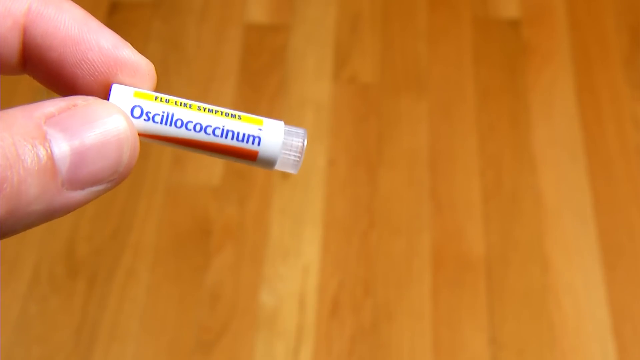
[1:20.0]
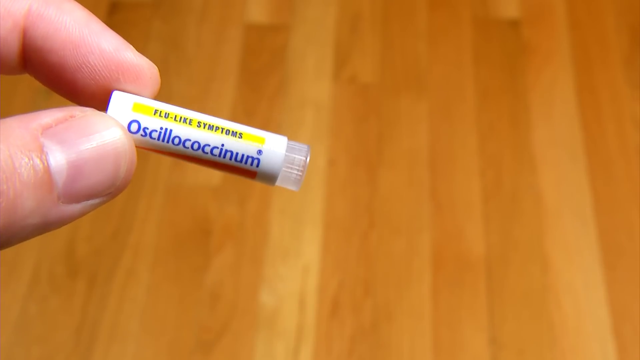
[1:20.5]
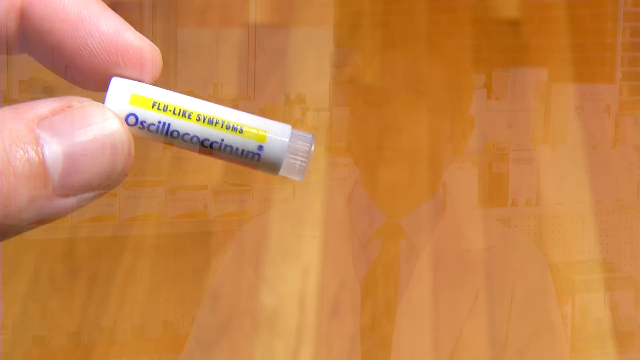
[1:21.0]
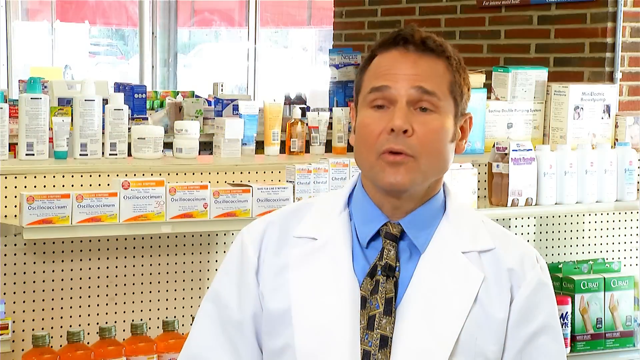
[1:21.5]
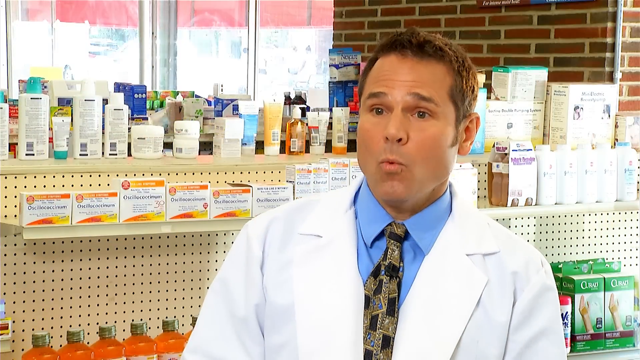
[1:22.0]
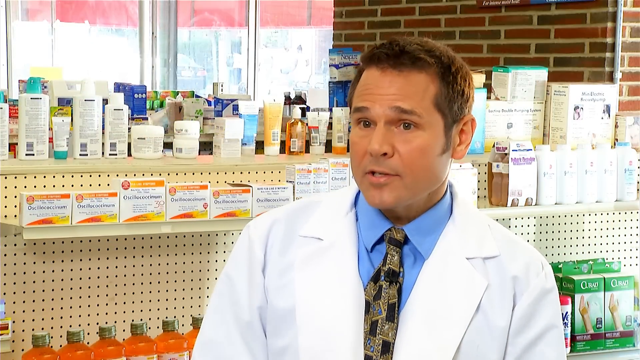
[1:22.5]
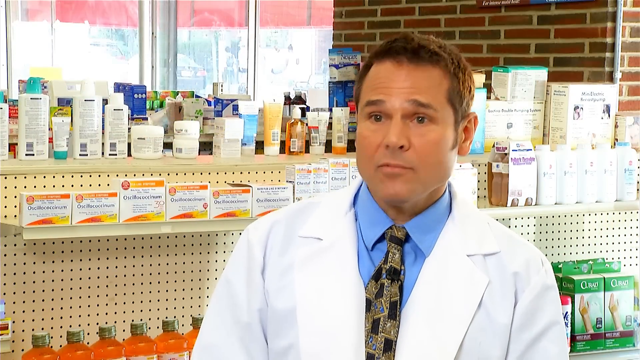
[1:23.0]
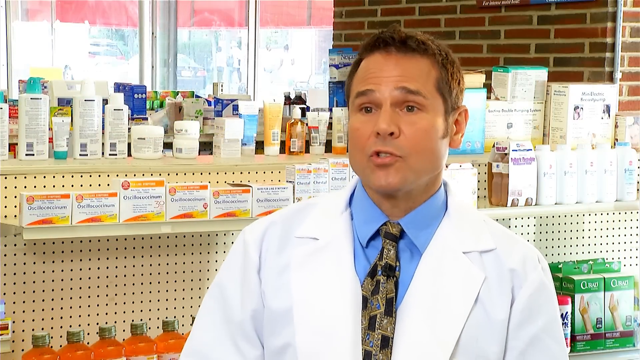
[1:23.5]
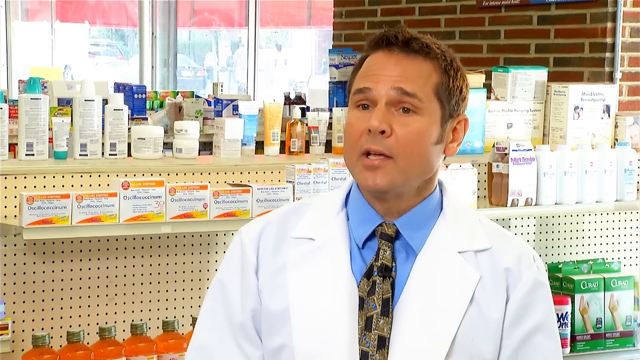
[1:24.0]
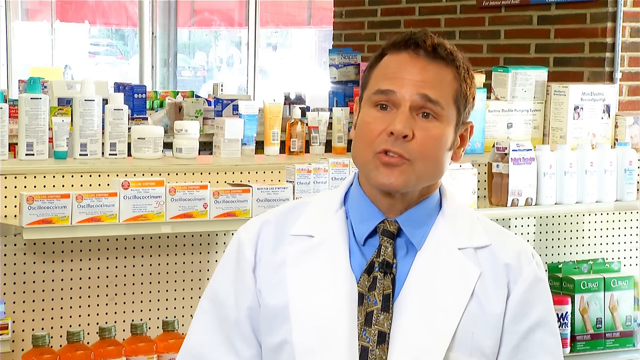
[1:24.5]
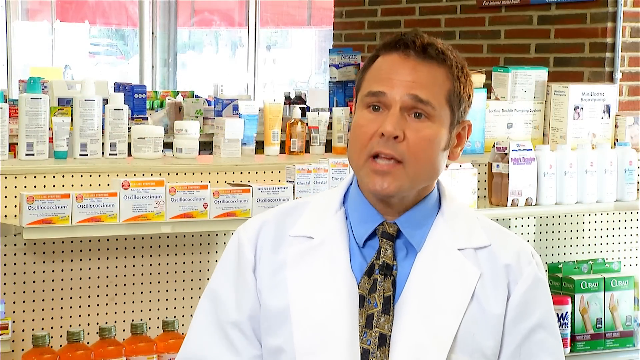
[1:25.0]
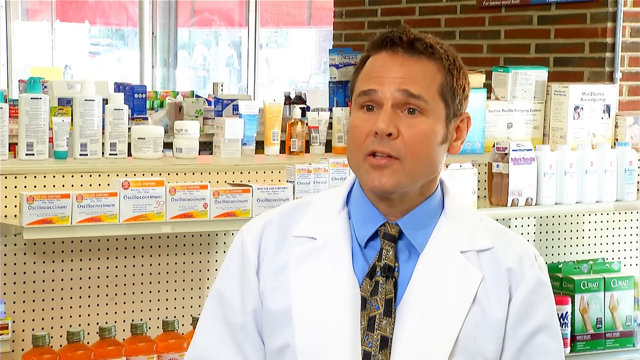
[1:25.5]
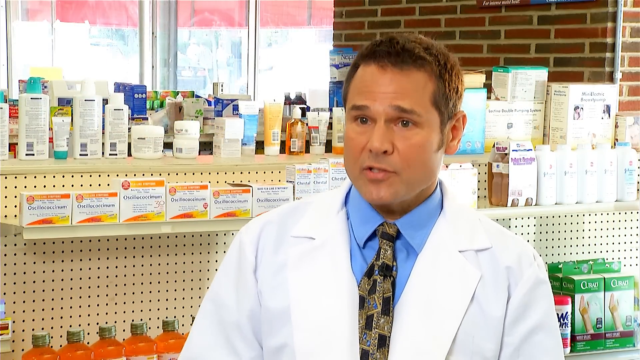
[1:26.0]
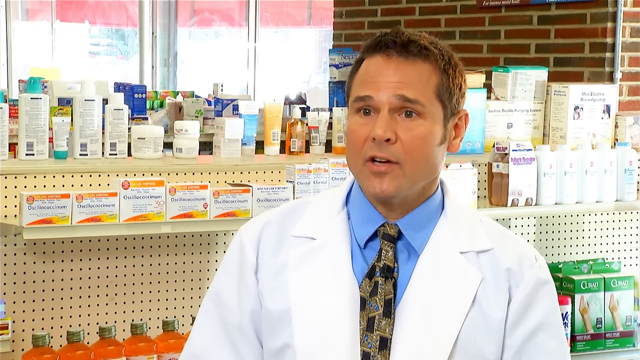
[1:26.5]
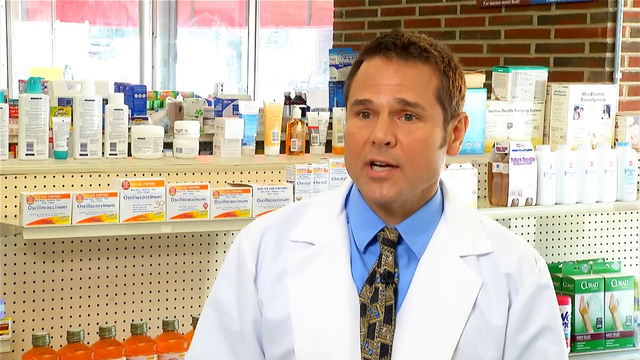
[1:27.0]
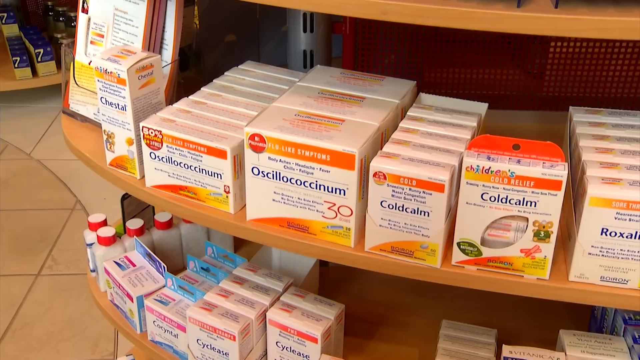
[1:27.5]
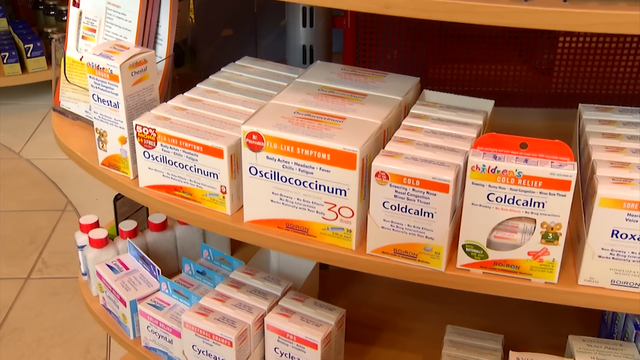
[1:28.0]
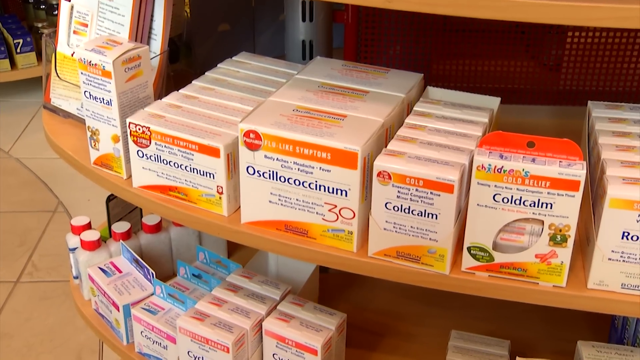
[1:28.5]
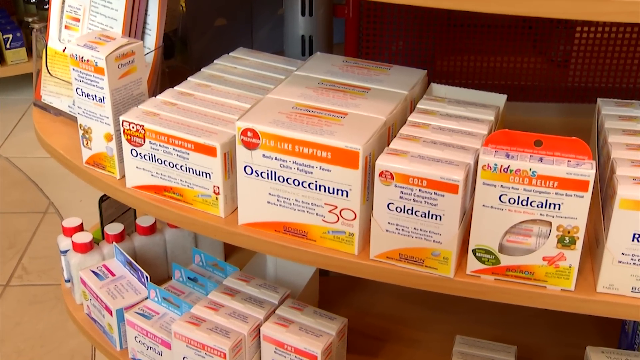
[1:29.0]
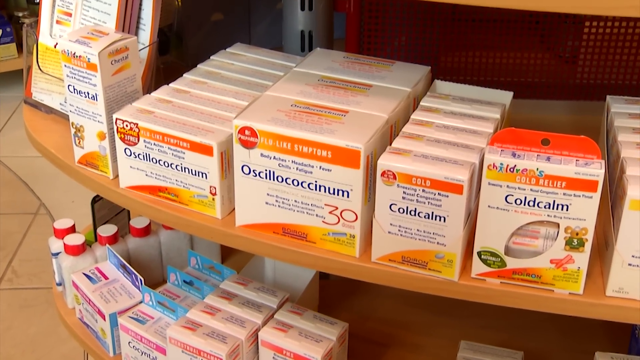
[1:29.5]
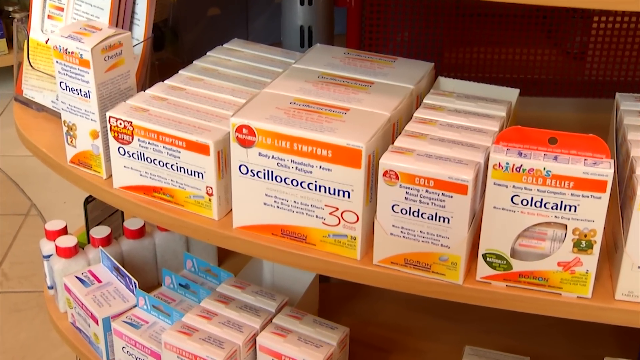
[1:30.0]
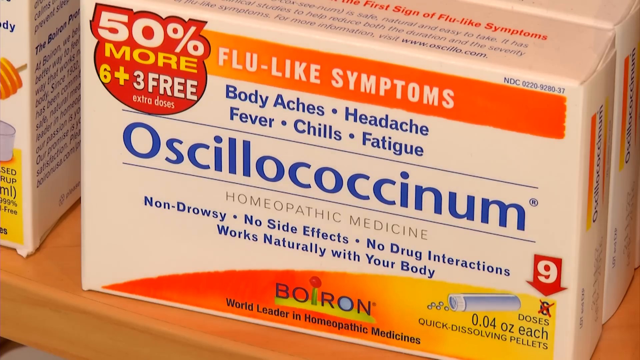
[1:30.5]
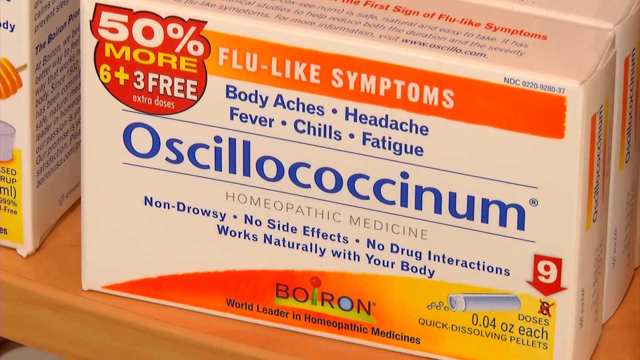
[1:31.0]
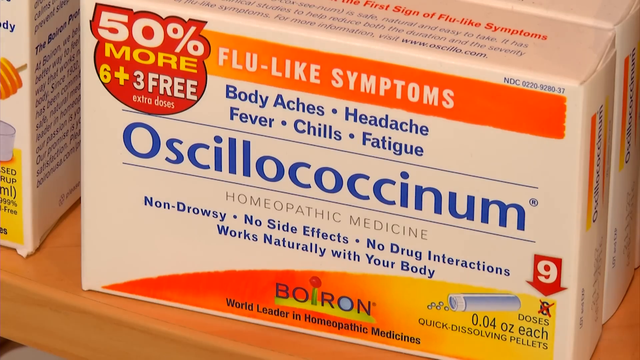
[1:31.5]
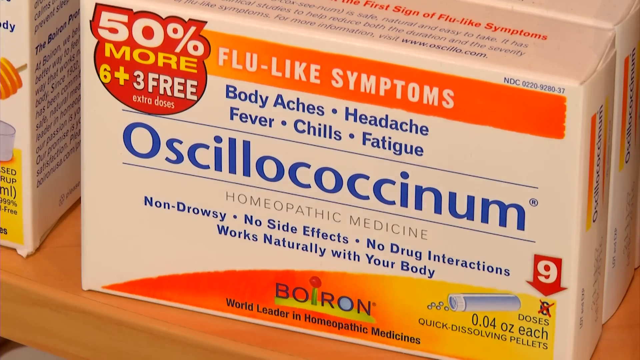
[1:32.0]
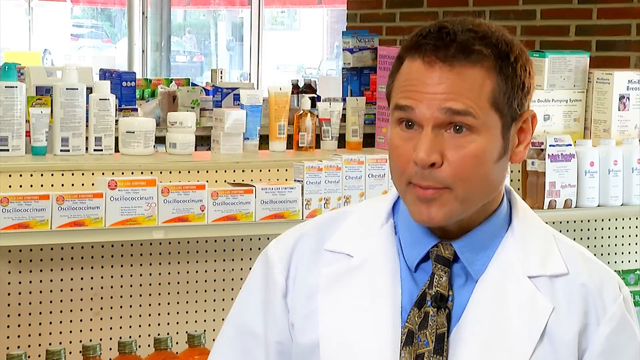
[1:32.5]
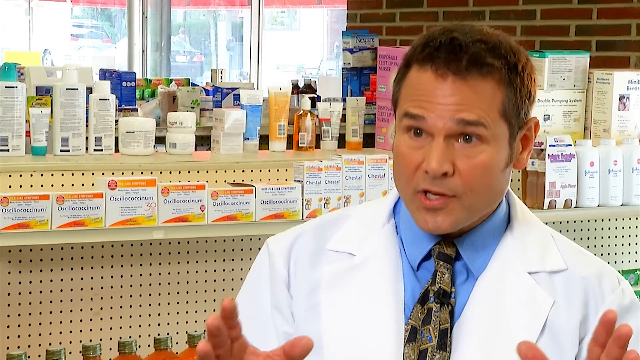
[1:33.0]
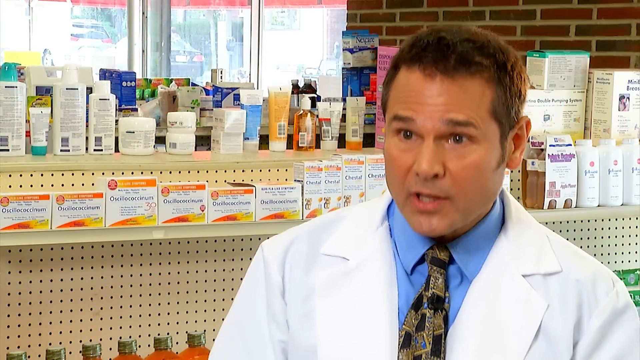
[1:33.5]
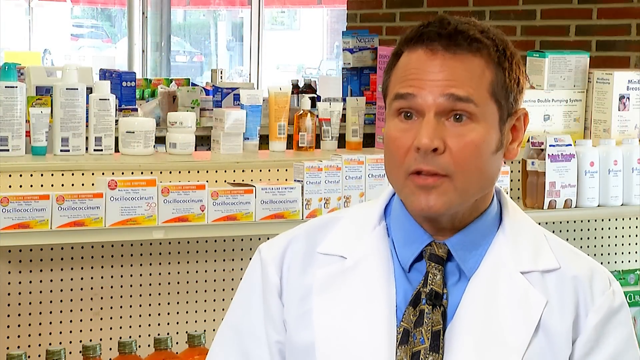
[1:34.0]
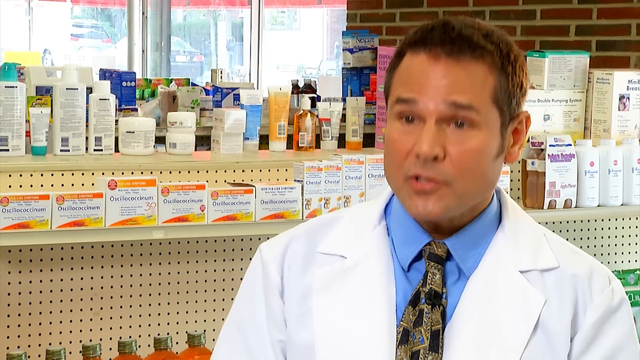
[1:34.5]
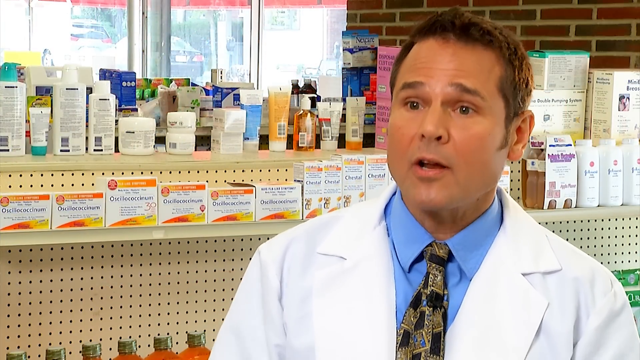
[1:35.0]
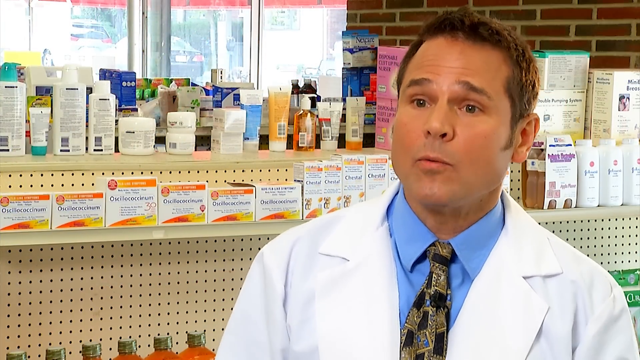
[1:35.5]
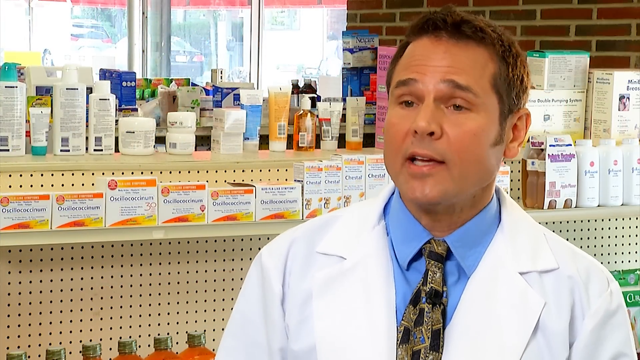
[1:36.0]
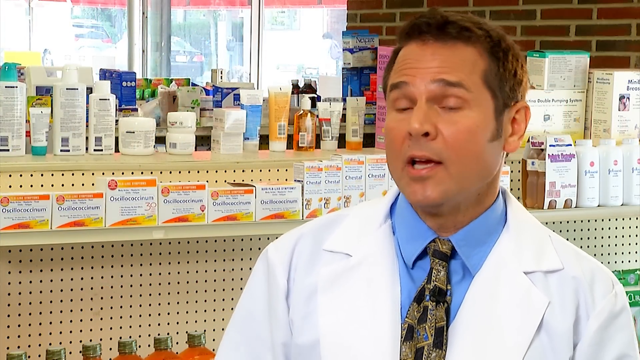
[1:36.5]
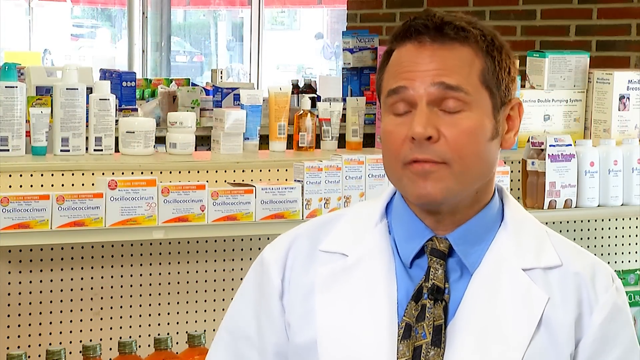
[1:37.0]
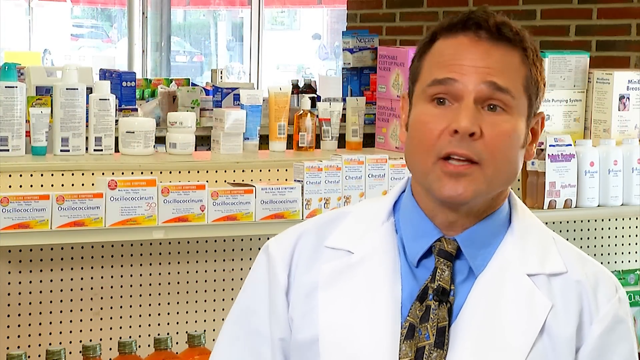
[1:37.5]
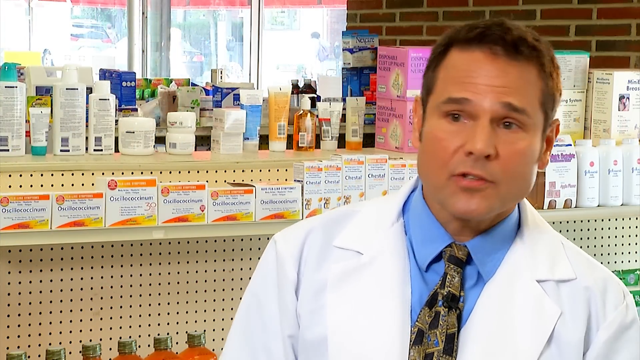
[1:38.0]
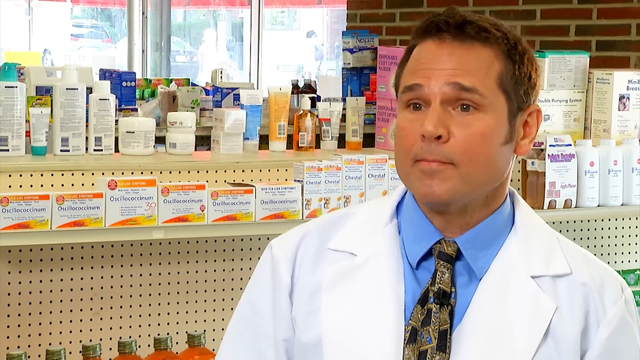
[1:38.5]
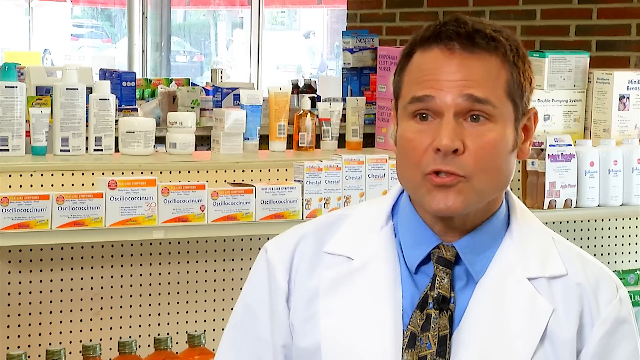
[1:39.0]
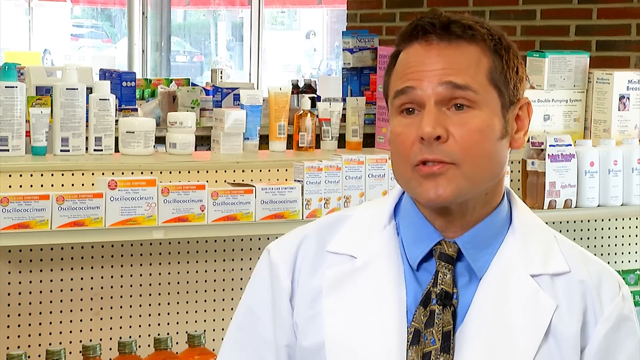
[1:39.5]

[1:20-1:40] A small white tube of Oscillococcinum is held between the thumb and finger of someone's left hand. In the background is a polished, wood-slatted floor, out of focus. The thumb and finger rotate the tube to show more of it. The image then changes to a pharmacist in a white lab coat with a blue shirt and a grey and black tie, standing in front of a pharmacy shelf containing the medication and various other bottles and lotions, talking into the camera. Next comes a wooden display shelf in a shop with various cold remedies on display, including Oscillococcinum, and the image zooms in on this medication. The image returns to the pharmacist in the white lab coat and blue shirt talking into the camera in front of a shelf of the medication; his hands are briefly seen in frame as he talks passionately.